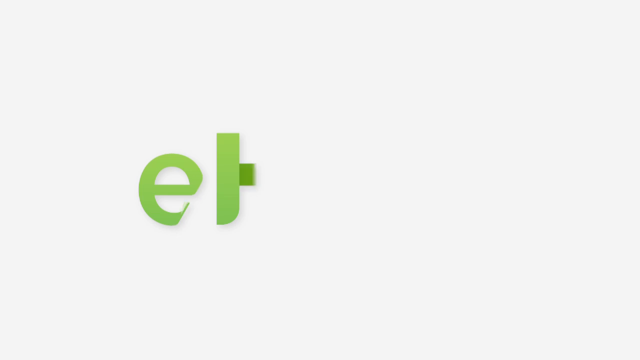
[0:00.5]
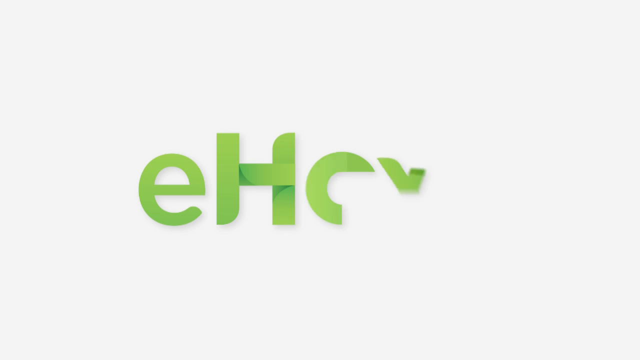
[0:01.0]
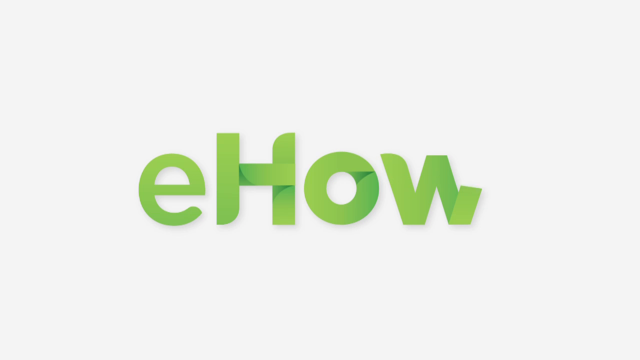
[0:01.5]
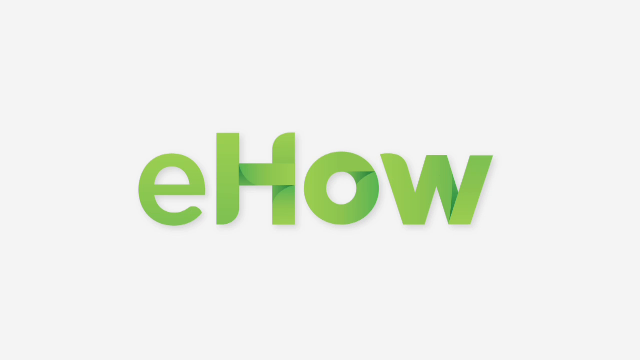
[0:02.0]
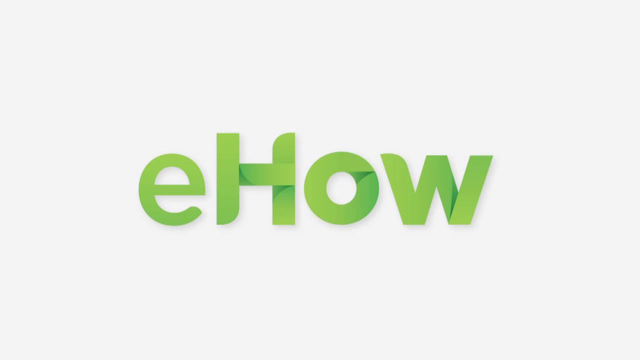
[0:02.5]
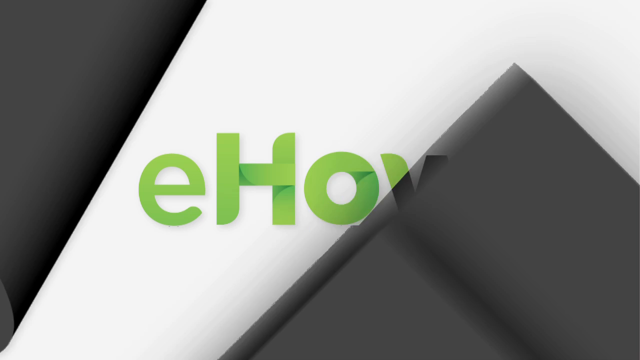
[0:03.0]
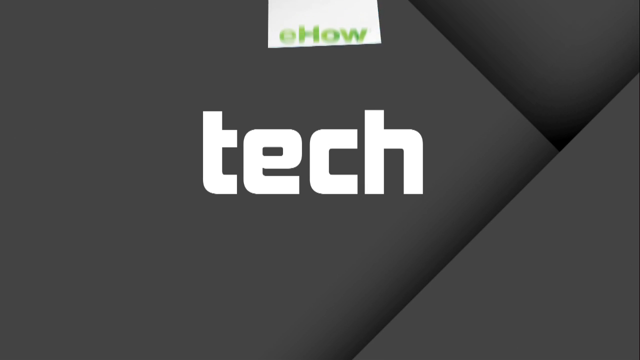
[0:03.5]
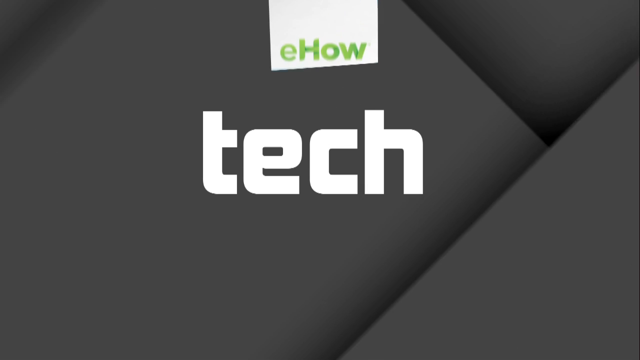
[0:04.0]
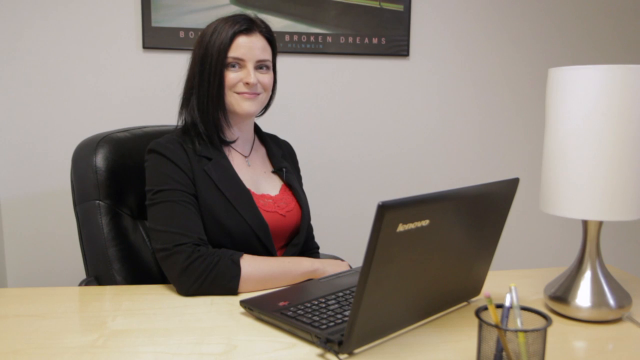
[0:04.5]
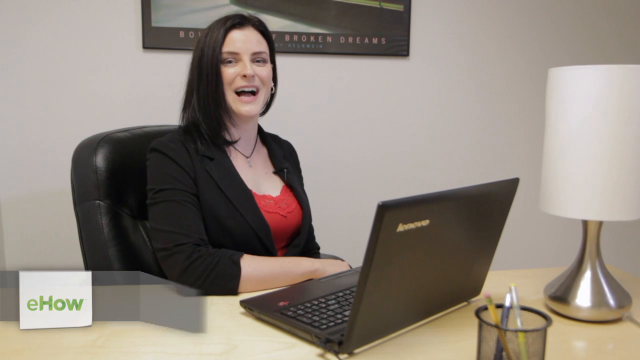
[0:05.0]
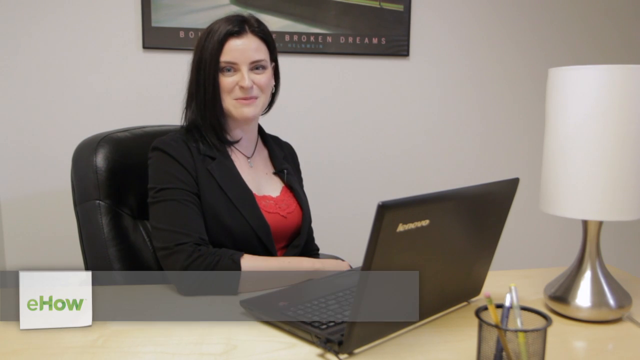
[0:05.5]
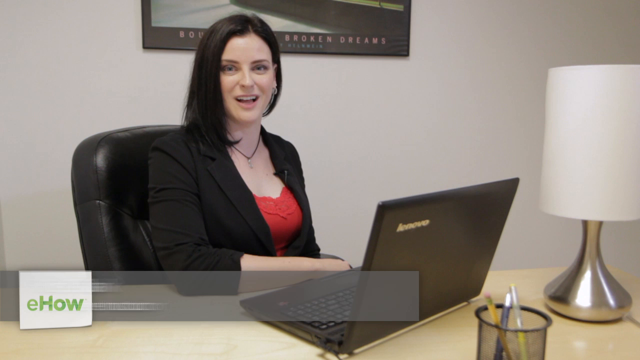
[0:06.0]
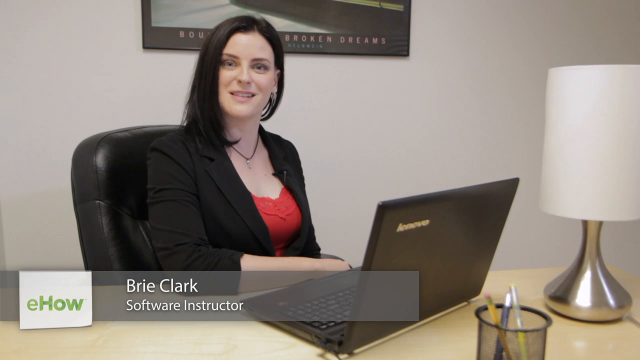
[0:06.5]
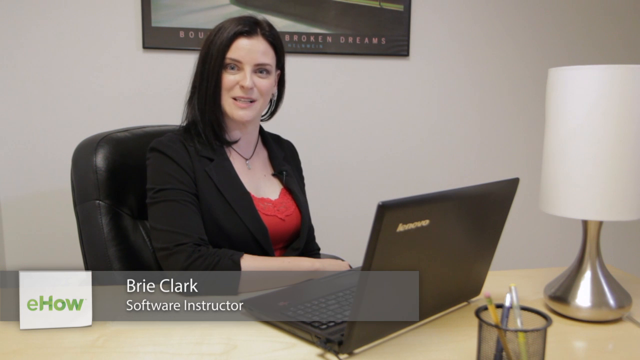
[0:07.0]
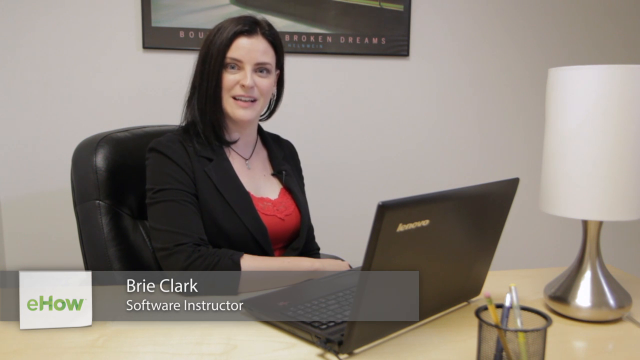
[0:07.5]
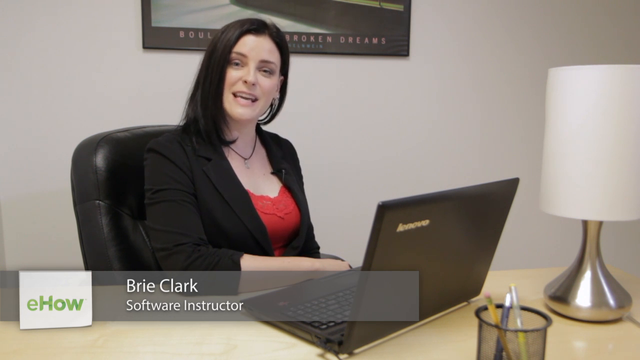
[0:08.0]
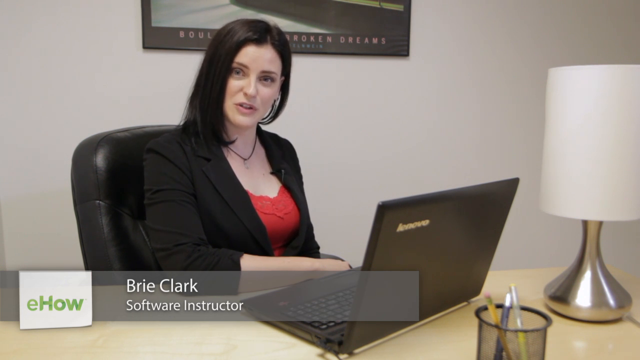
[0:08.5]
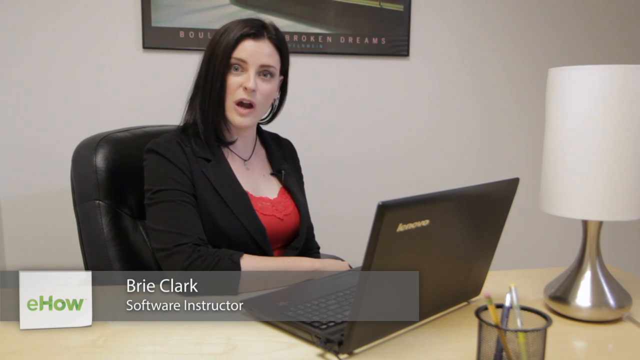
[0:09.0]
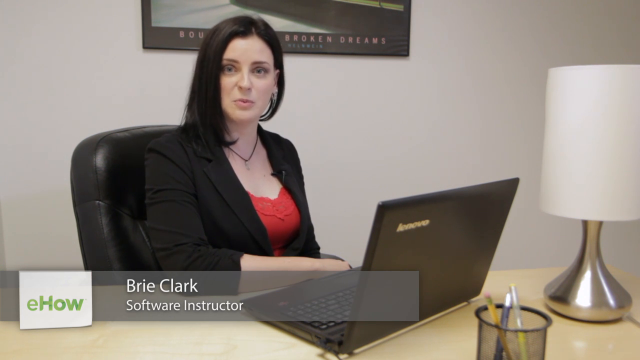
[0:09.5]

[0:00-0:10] A white screen appears, and the word "ehow" comes up on it. It looks like it is made out of construction paper, with the "e" lowercase and the "how" uppercase, all in green. The screen then goes black and looks like various cuts of paper, with the ehow now at the top in a little white box and the word "tech" in the middle, all lowercase in a white font. A woman then comes on screen, and text identifies her as Brie Clark, a software instructor.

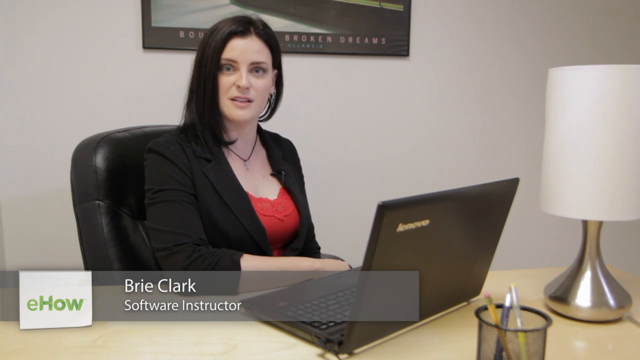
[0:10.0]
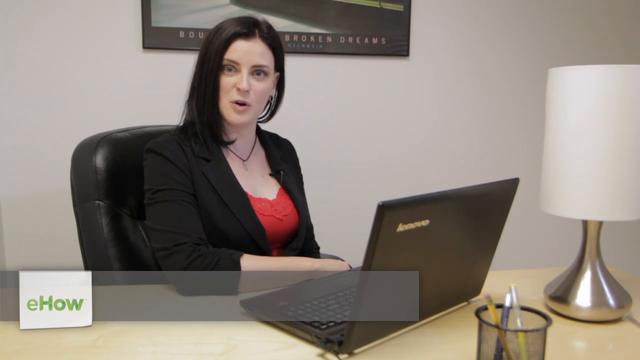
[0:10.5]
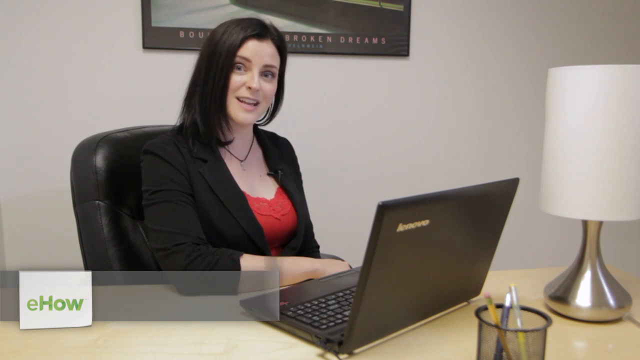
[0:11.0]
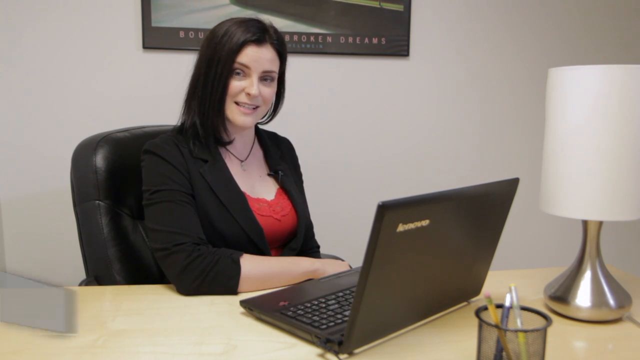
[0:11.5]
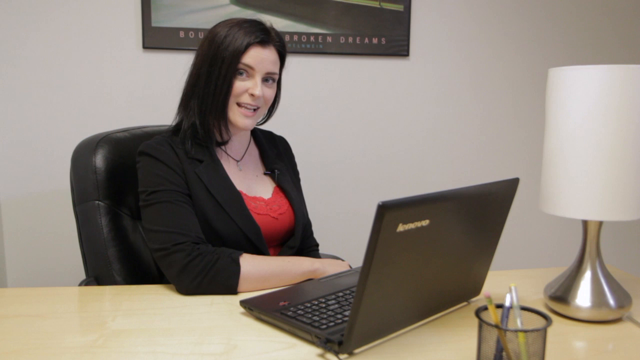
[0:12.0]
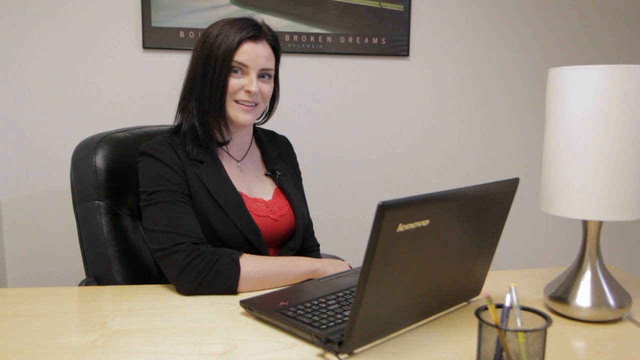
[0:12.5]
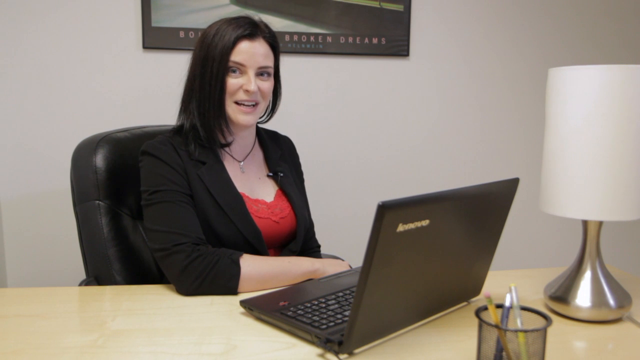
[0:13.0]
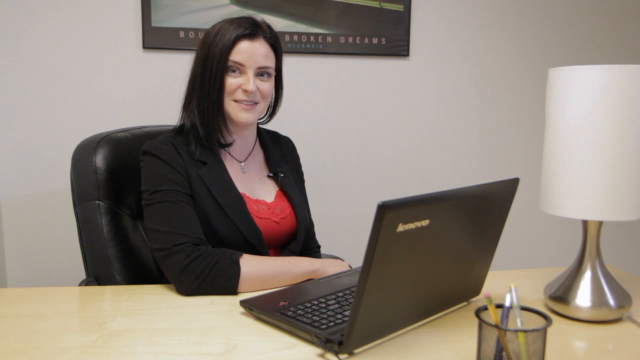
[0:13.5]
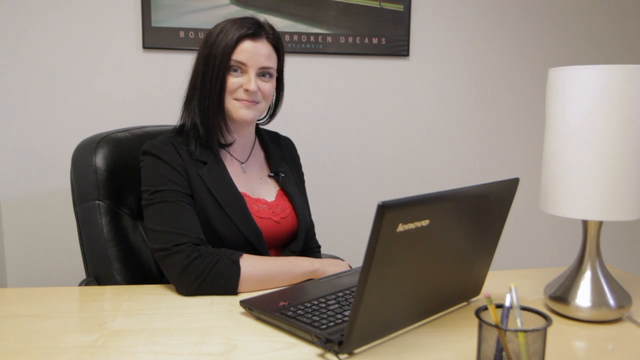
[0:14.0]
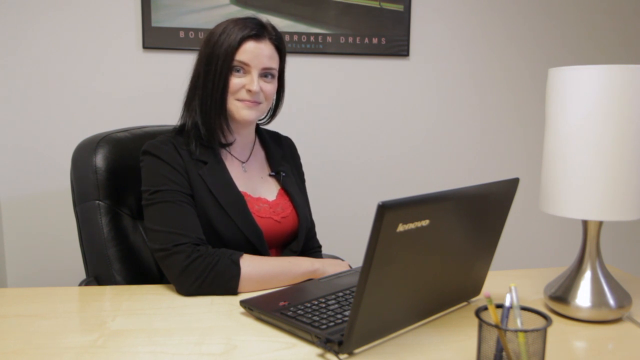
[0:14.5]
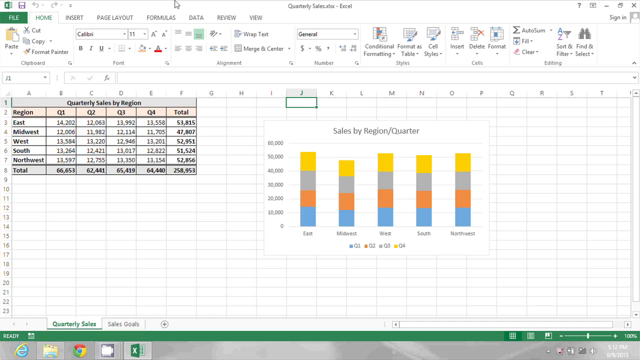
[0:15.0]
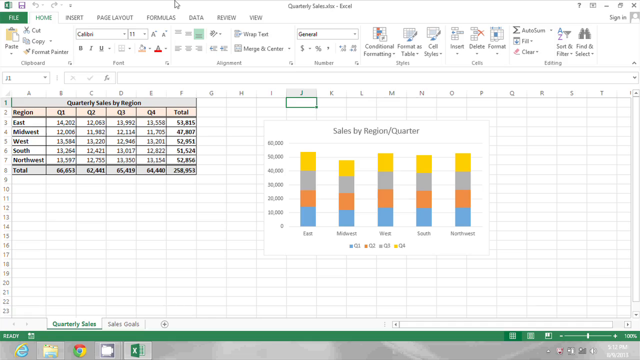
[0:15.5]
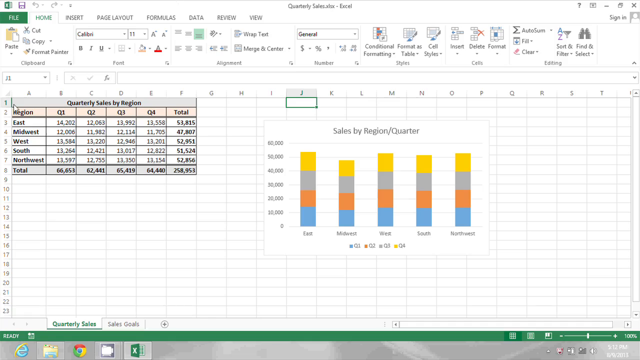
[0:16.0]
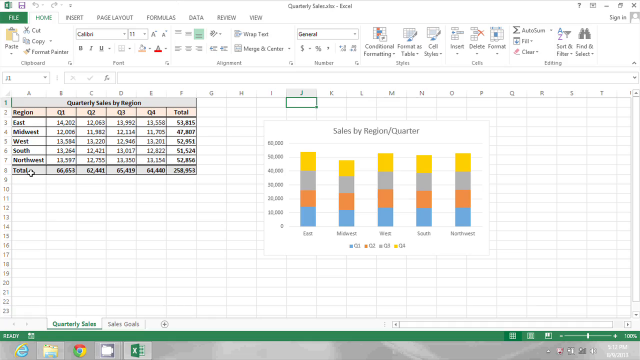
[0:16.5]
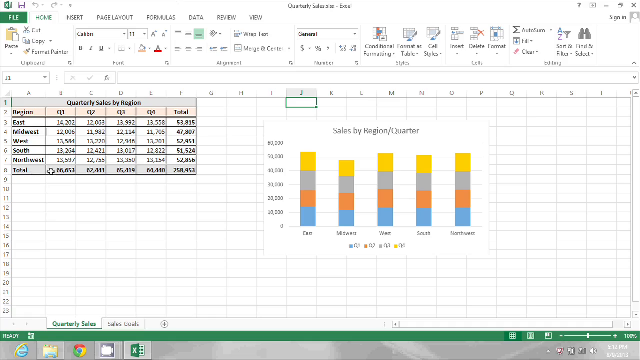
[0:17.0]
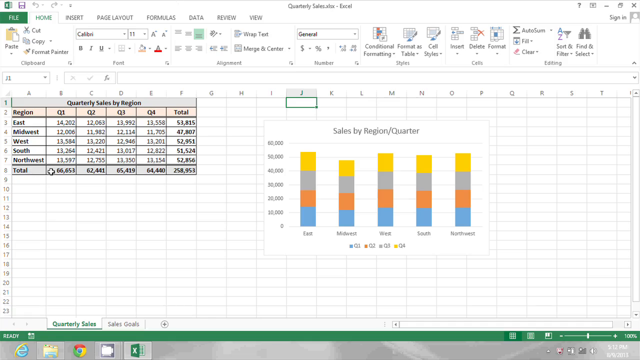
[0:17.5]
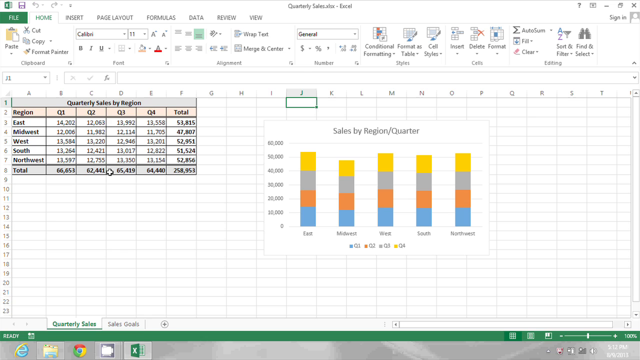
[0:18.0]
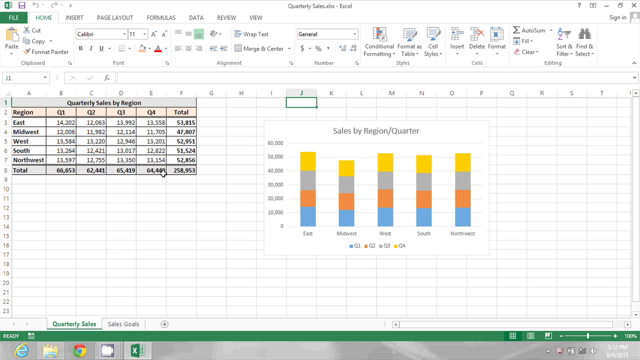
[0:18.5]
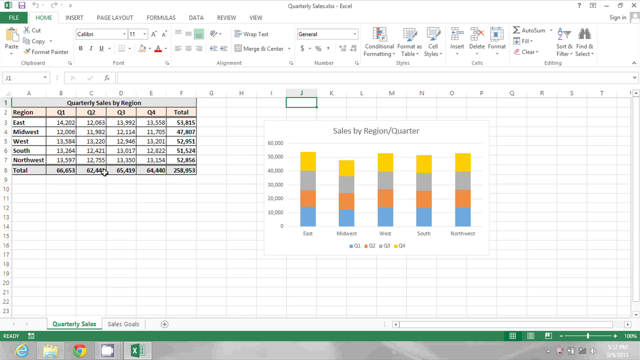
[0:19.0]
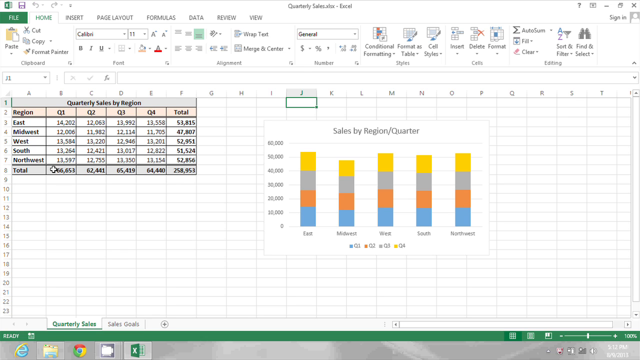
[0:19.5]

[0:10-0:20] Brie Clark is on screen in what looks like an office with white walls. On the wall is a framed picture; the only legible text on it is "broken dreams", and the rest is cut off by her head. She is sitting in a large leather office chair at a desk of a light wood color, with her laptop in front of her. There is a camera with a sterling silver base and a white part, and a black pen holder with pens in it. She looks to be in her 20s or 30s and wears a spaghetti strap shirt with lace on the ends, a black coat and a necklace. She has very dark, almost black hair and a pale complexion. The screen then cuts to an Excel page with two graphs, one titled "quarterly sales by region" and the other "sales by region quarter".